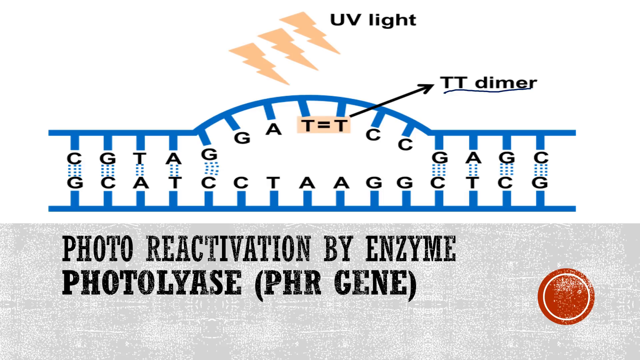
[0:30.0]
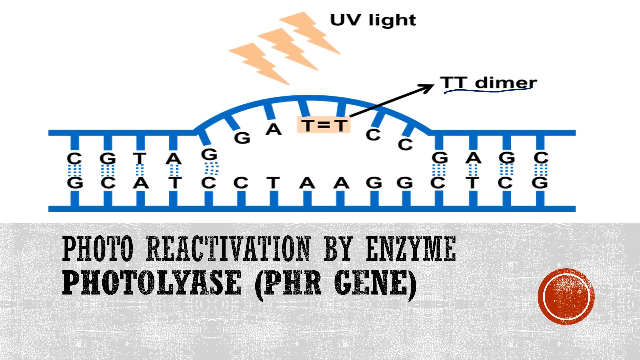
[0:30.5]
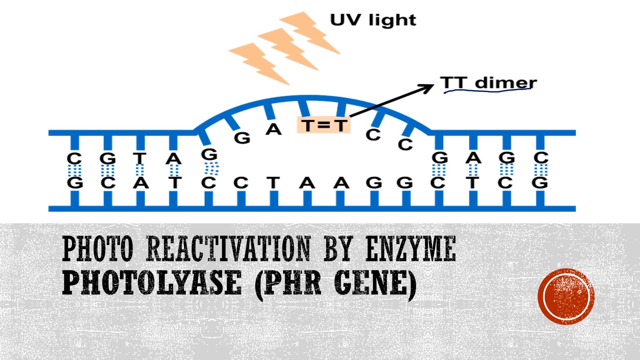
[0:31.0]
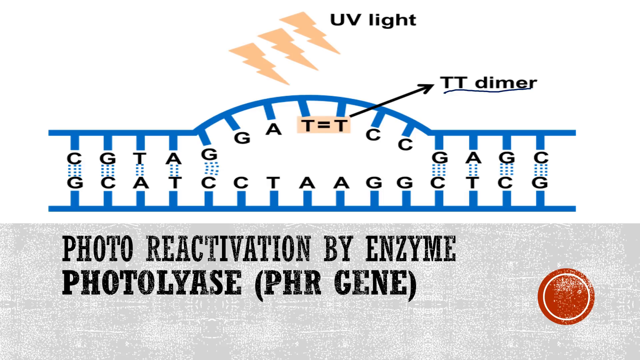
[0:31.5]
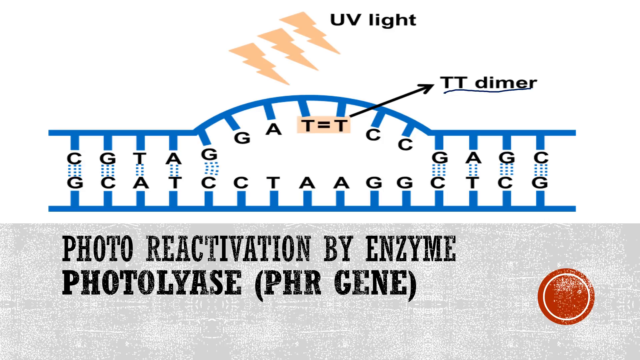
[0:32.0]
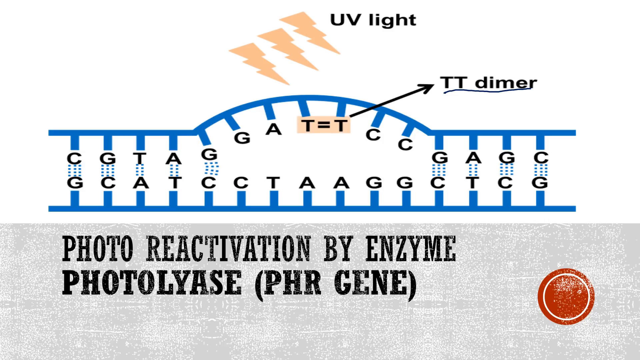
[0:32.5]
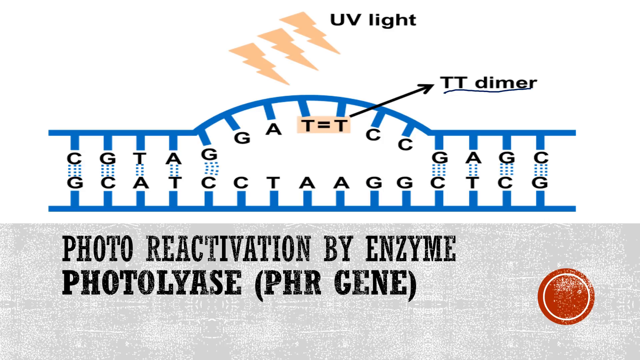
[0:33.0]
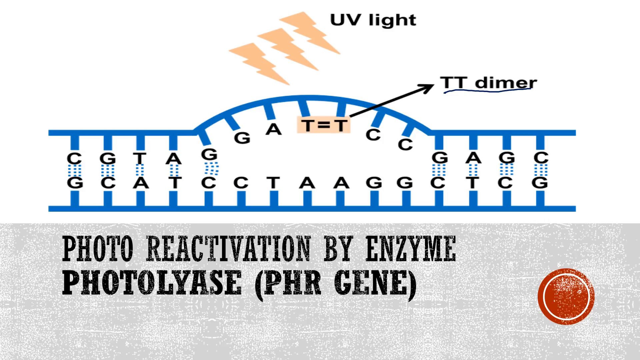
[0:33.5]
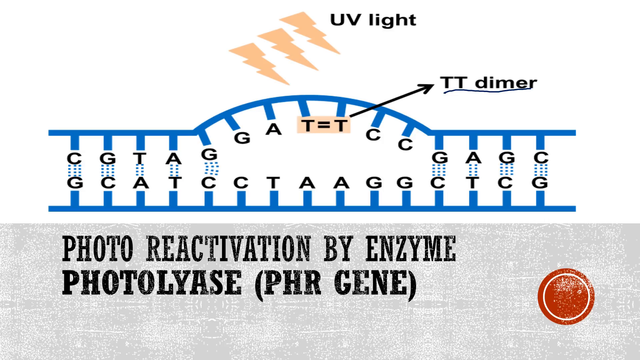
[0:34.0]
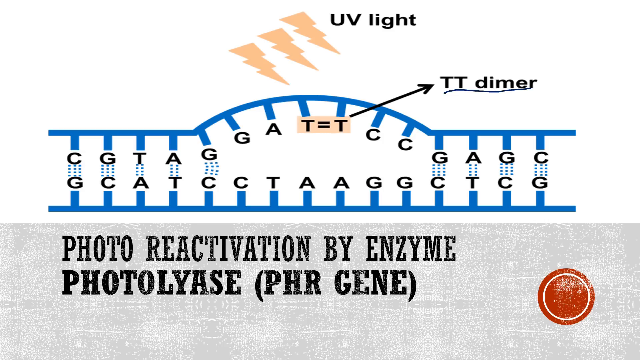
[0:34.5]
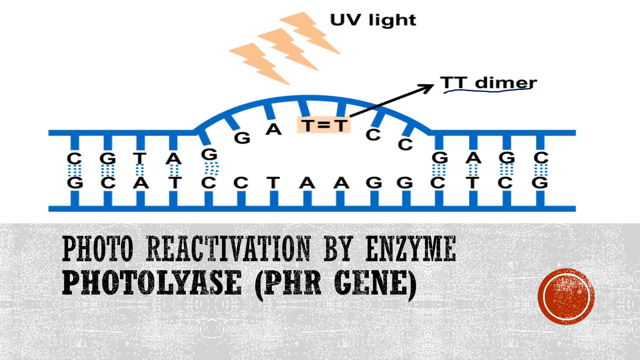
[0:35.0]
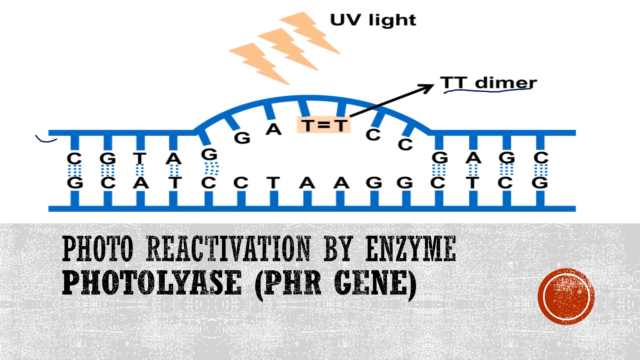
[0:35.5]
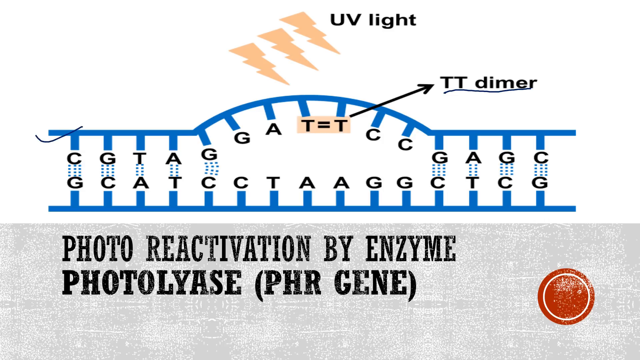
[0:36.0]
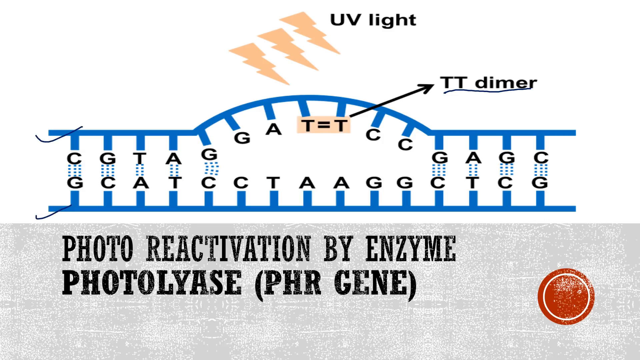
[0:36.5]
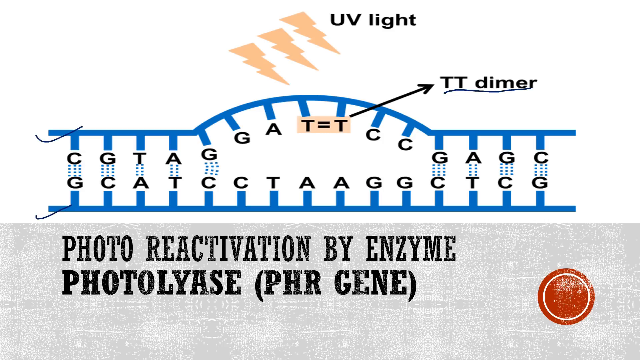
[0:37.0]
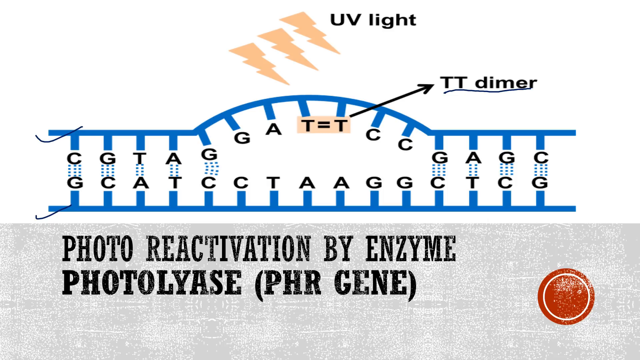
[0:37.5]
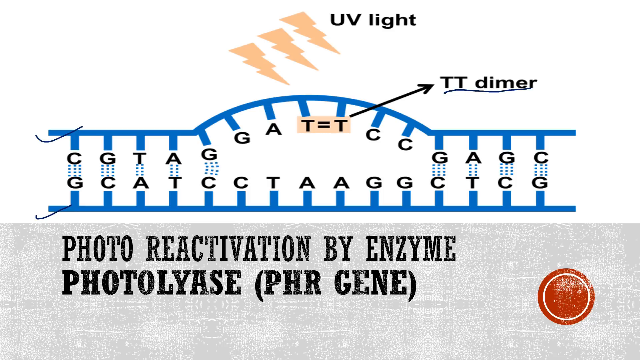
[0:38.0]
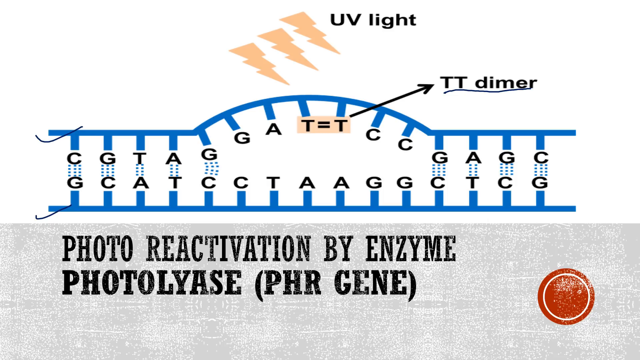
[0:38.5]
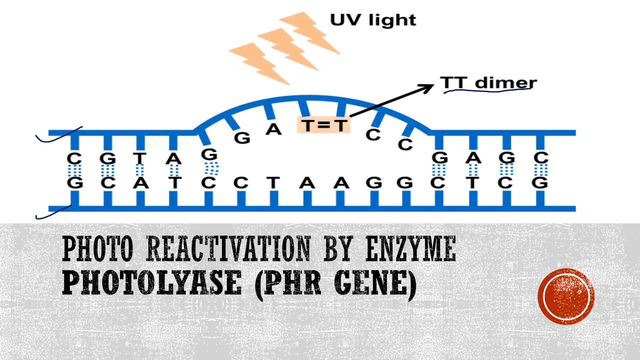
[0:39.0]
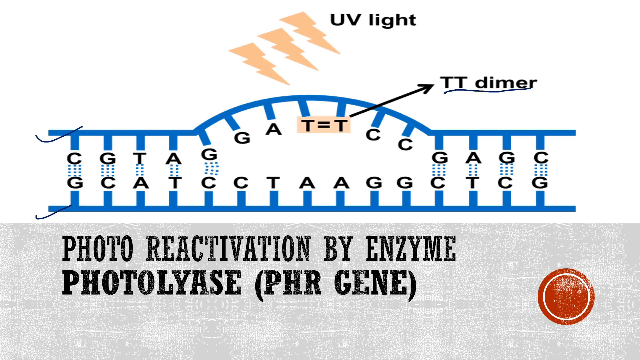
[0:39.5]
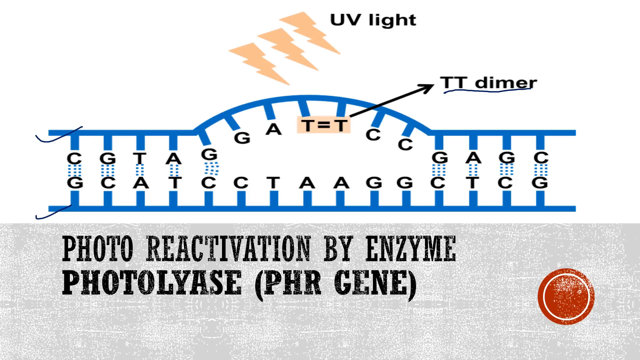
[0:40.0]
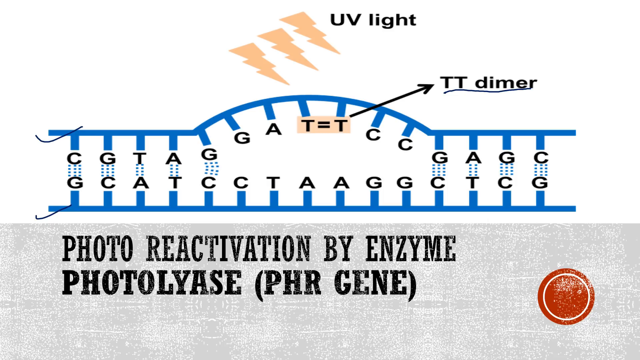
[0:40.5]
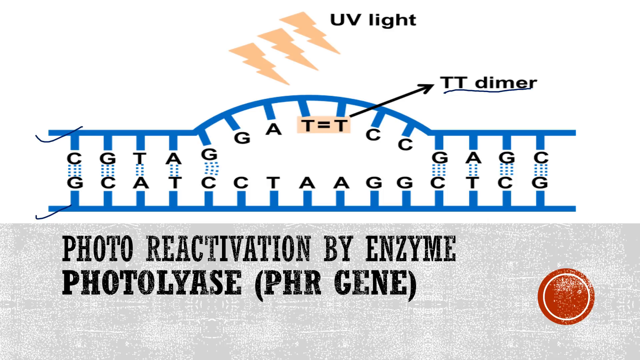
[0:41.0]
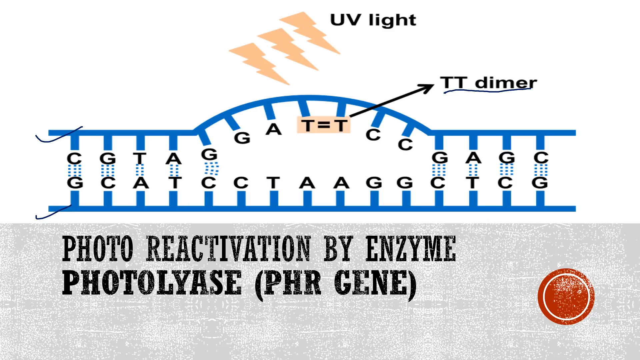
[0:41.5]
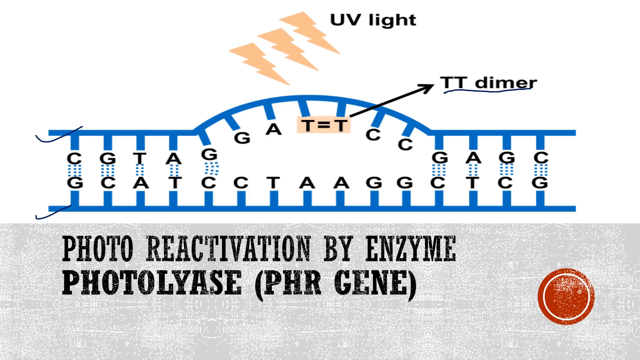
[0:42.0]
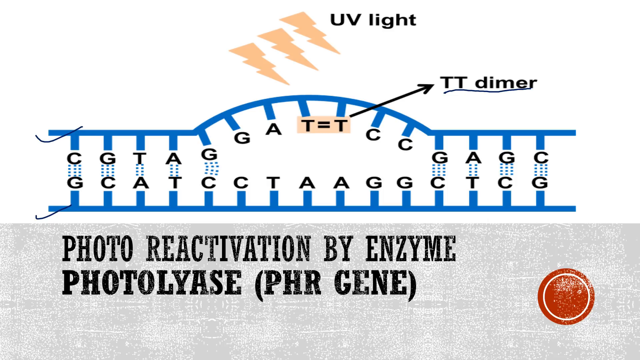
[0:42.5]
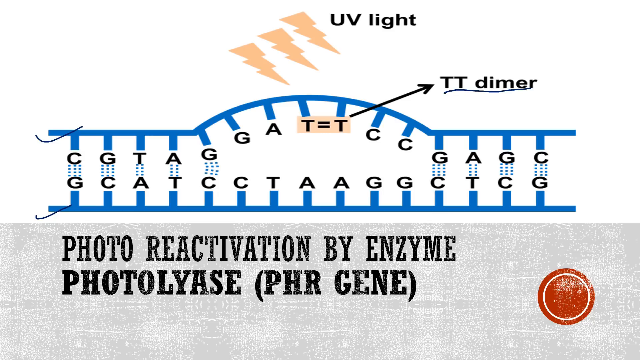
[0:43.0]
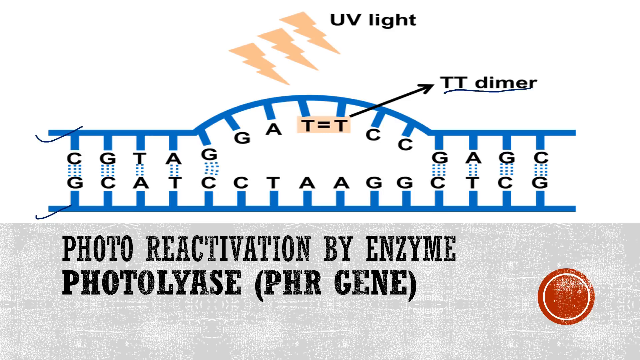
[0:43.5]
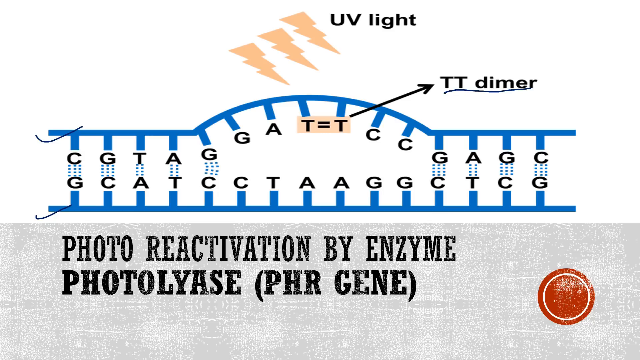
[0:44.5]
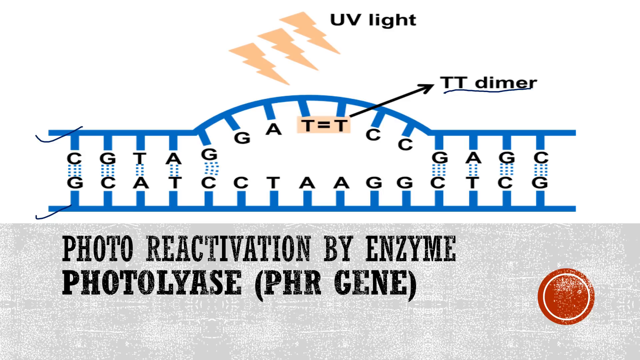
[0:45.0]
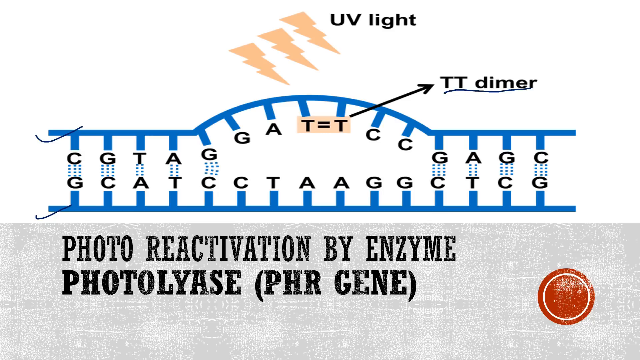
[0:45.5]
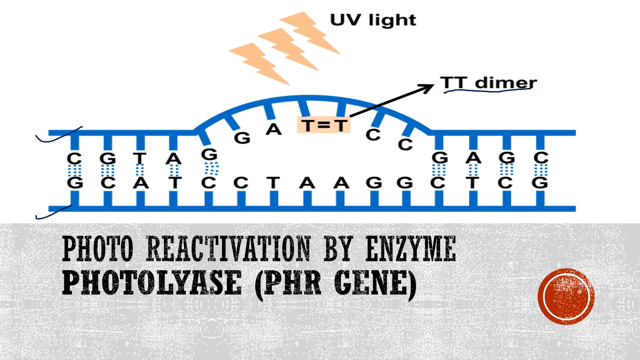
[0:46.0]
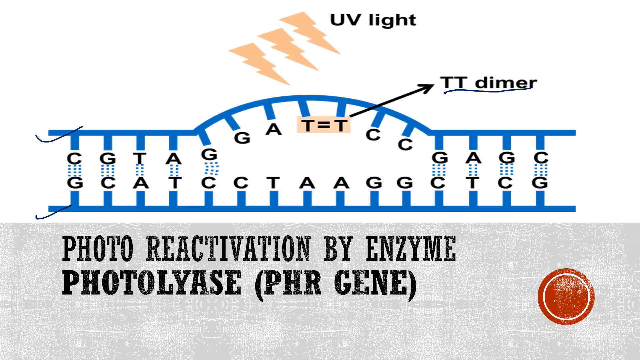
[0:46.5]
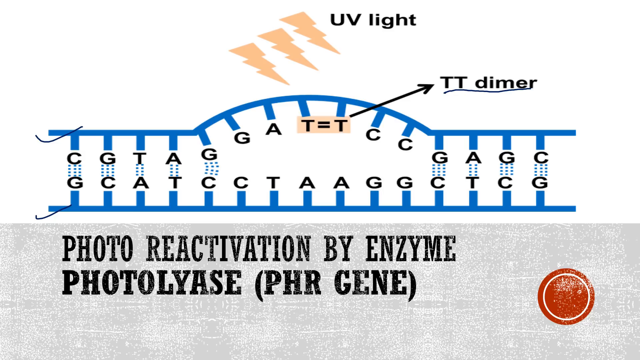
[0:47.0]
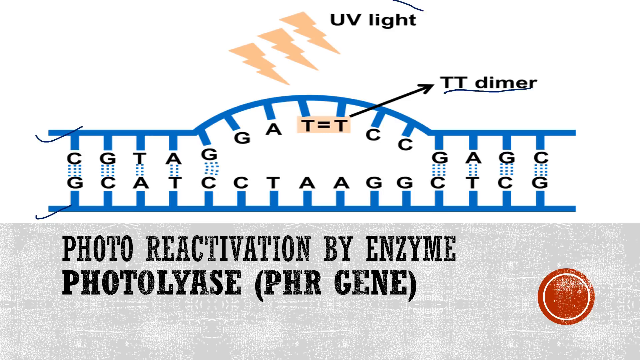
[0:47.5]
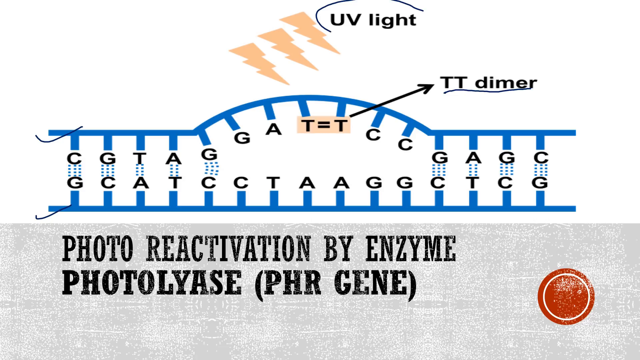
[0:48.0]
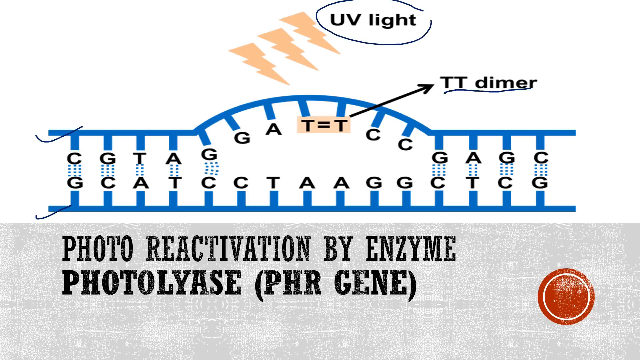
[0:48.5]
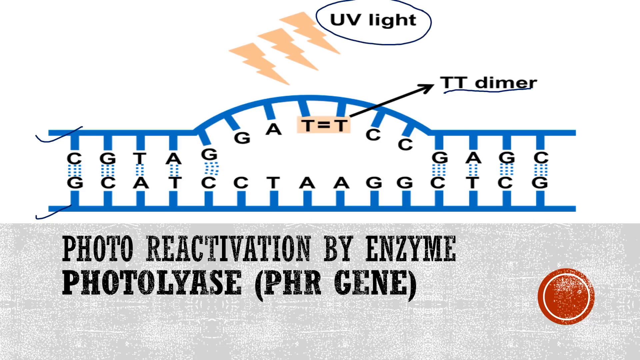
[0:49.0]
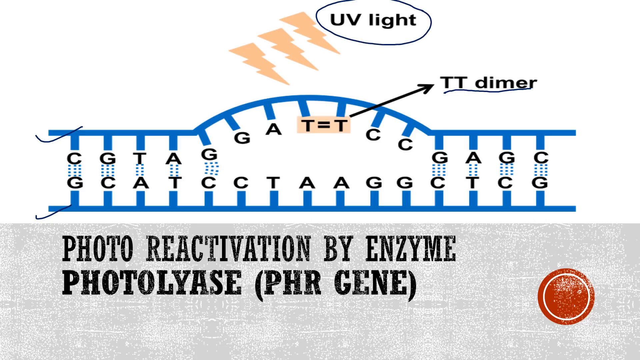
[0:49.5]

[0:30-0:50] An image illustrates UV light causing thymine dimers to form. A cartoon version of the reaction shows a bump where the thymine dimer forms.